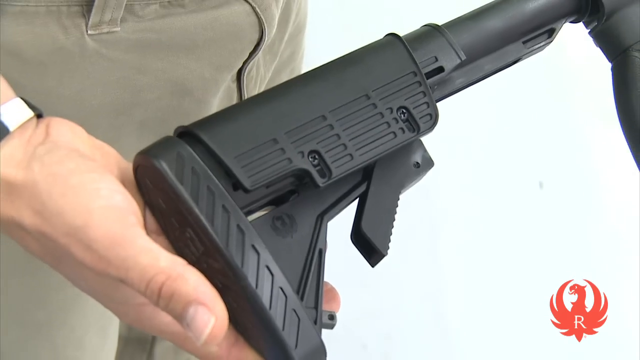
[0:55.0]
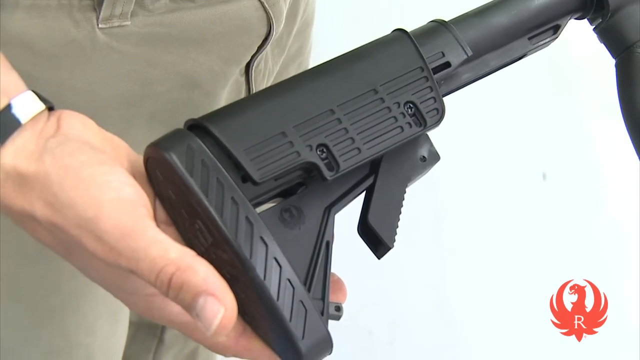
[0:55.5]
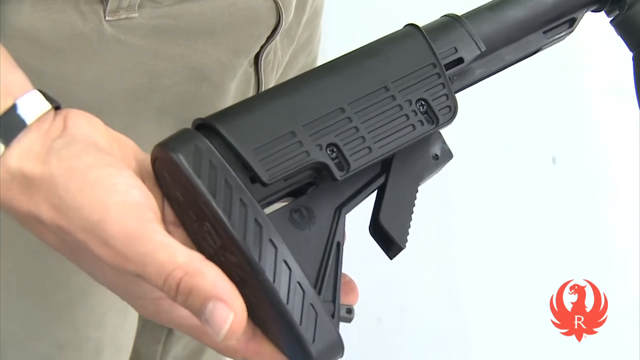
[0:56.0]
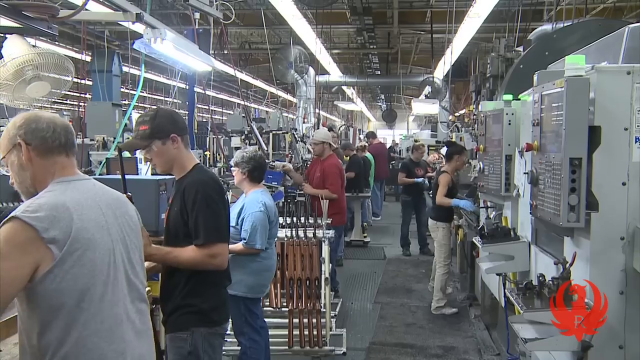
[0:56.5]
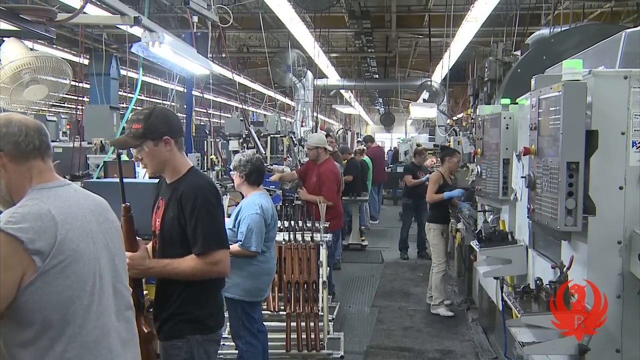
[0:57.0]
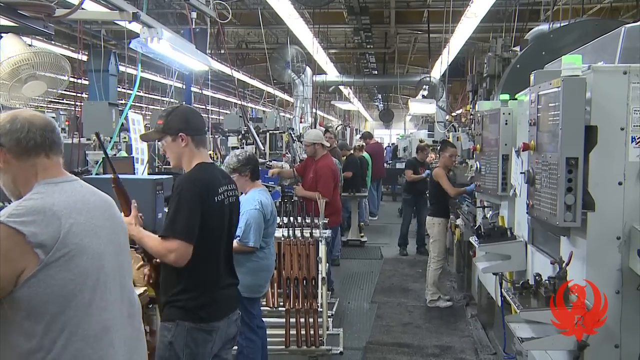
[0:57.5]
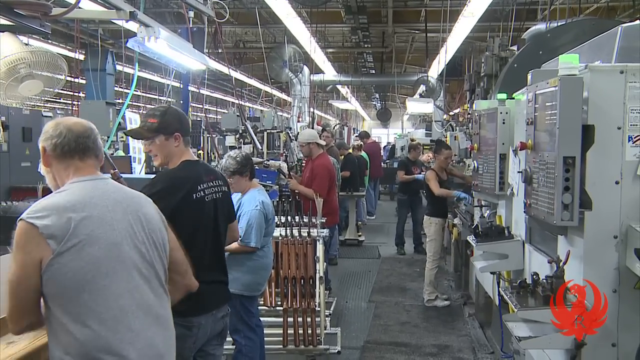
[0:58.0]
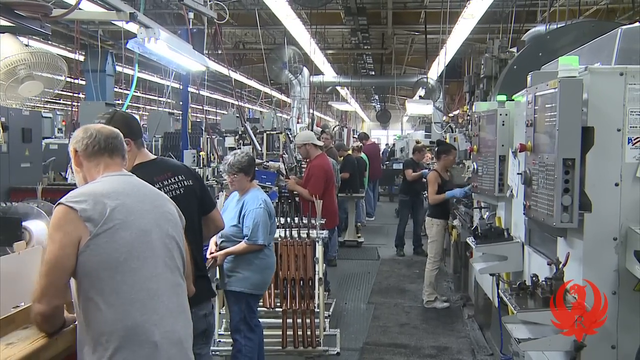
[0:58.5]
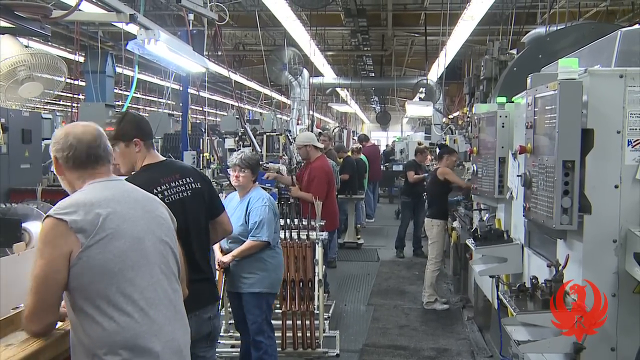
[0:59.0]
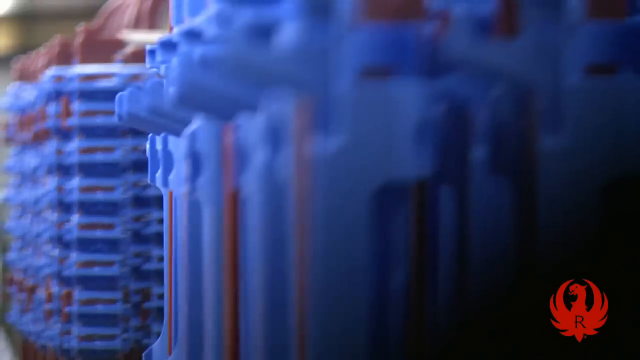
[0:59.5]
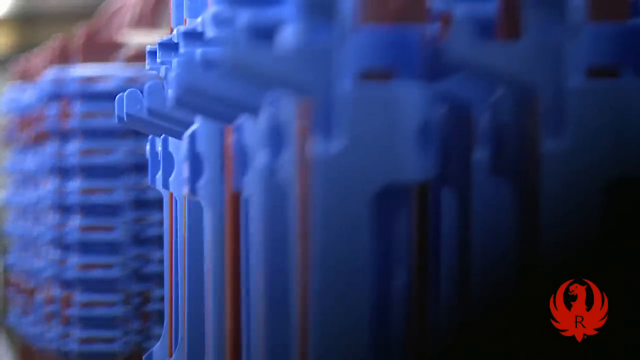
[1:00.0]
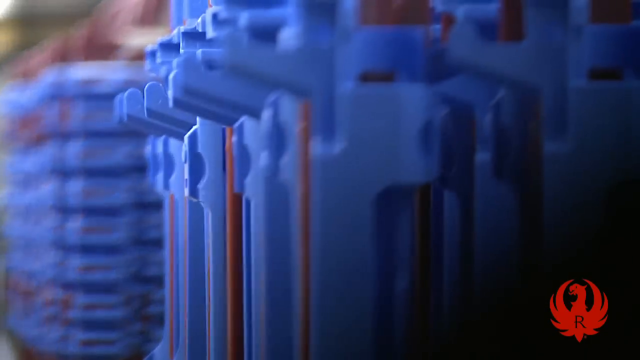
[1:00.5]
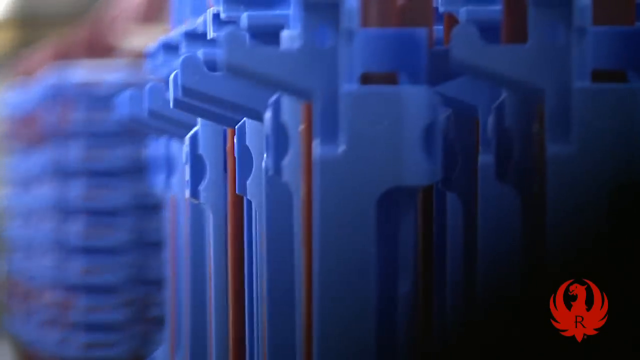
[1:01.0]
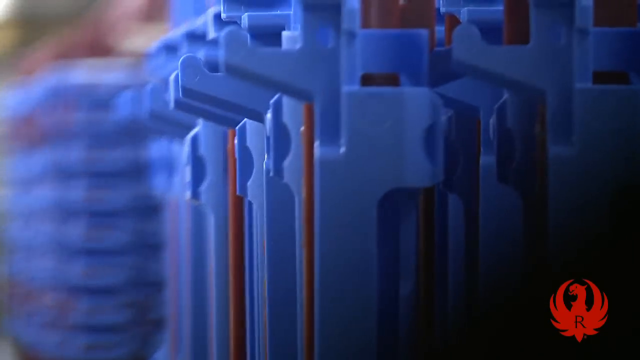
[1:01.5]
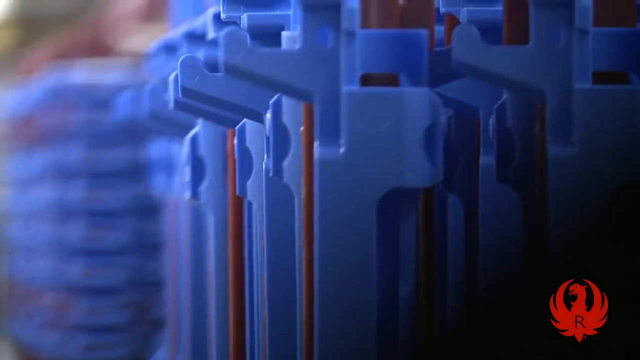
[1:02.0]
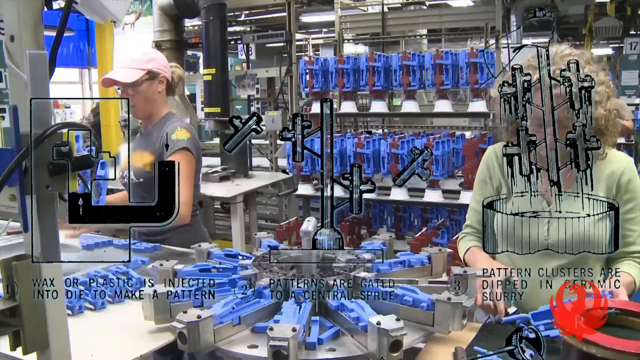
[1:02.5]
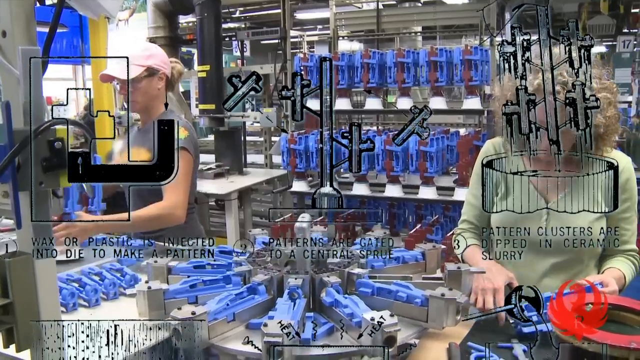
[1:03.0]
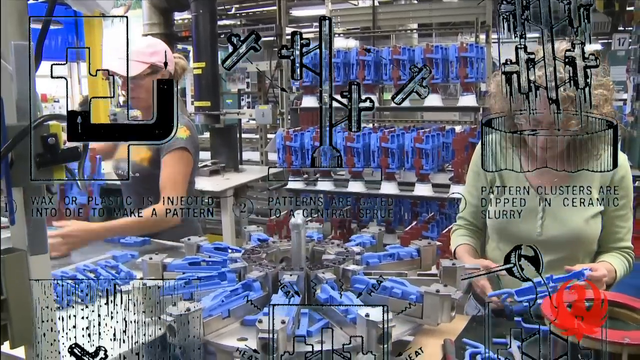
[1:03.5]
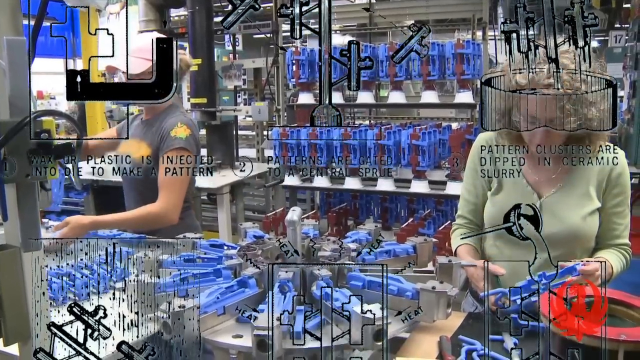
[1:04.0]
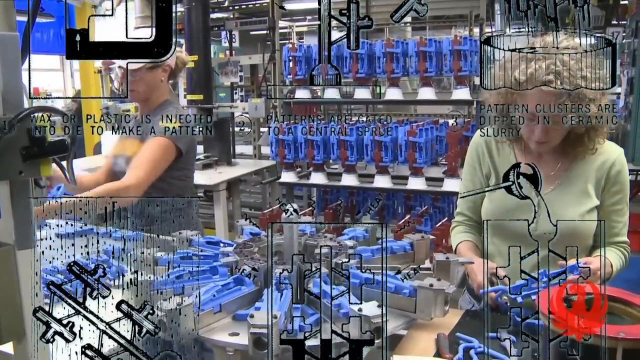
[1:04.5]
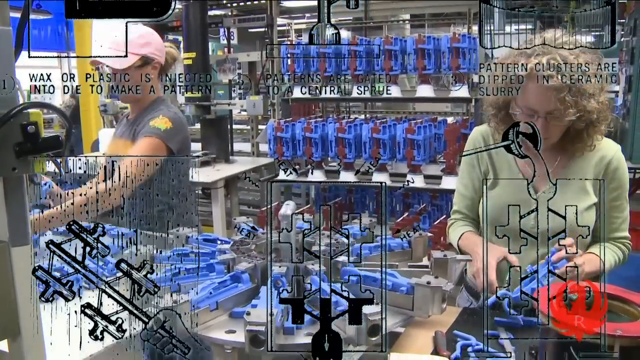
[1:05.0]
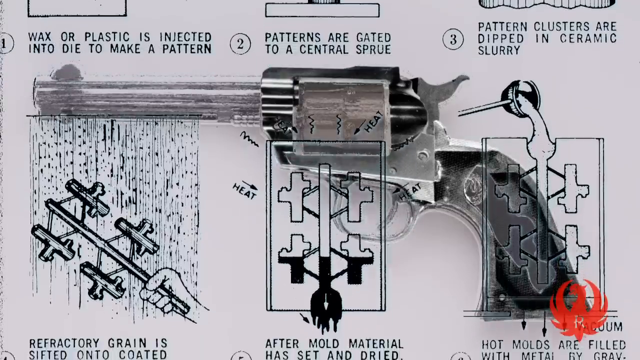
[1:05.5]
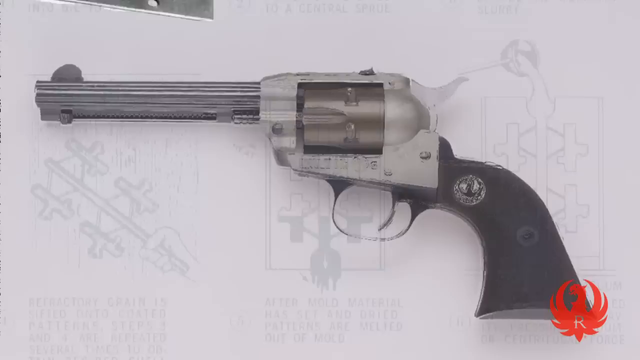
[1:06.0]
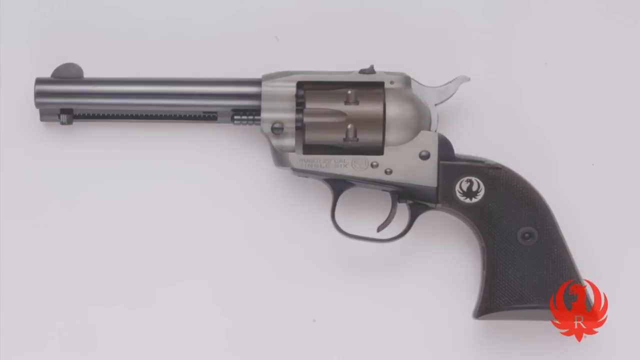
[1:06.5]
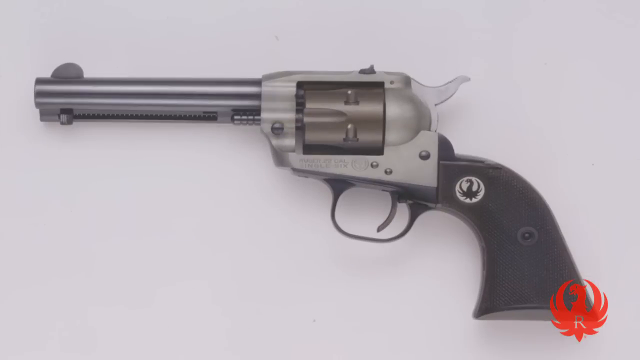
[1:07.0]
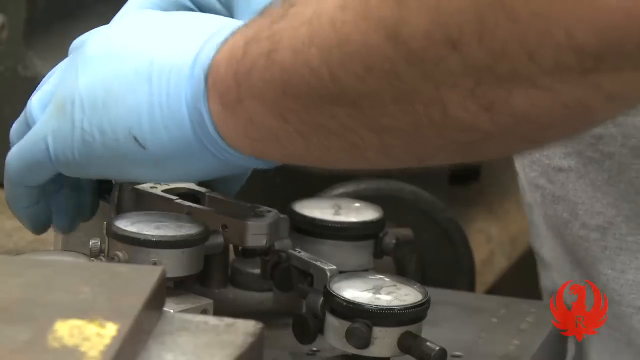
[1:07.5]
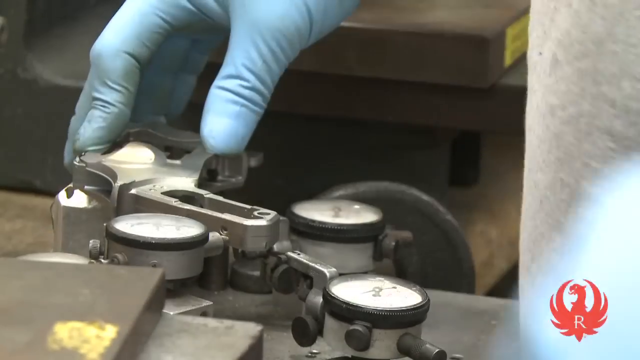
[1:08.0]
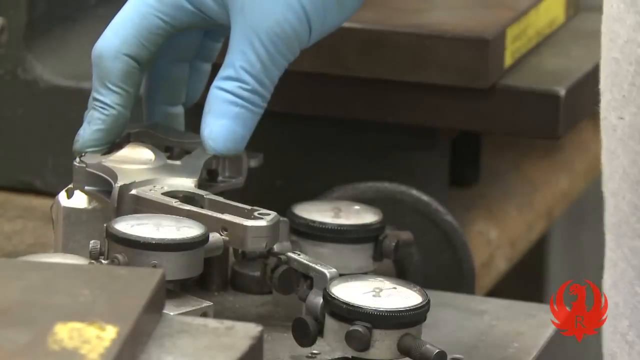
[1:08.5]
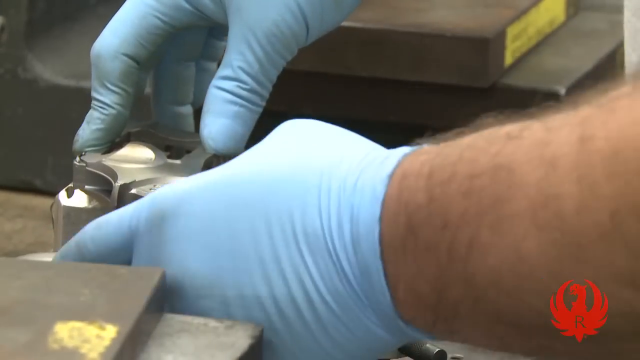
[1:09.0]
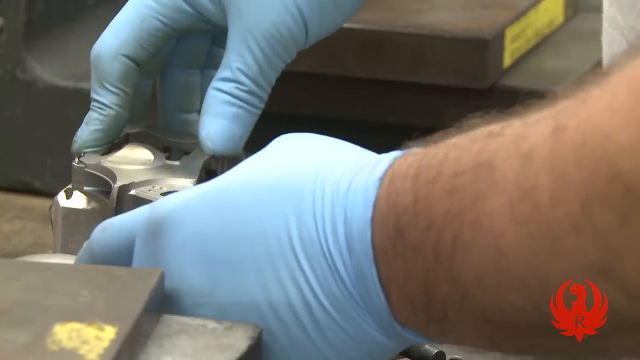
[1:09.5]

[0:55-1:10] A part of a gun is shown as the wax mold segment continues. People work in a factory, handling blue wax molds, and then people are apparently assembling firearms. Two women work with the wax molds. At the end there is a handgun with a black handle and a silver barrel.